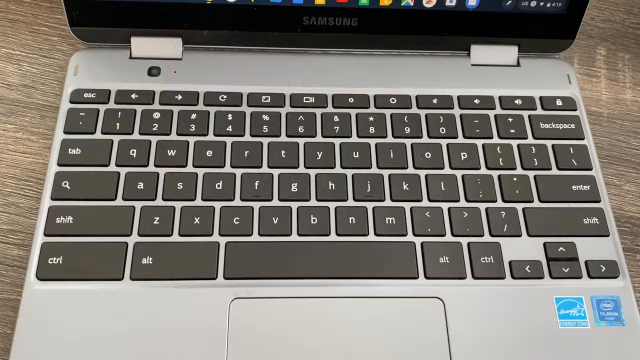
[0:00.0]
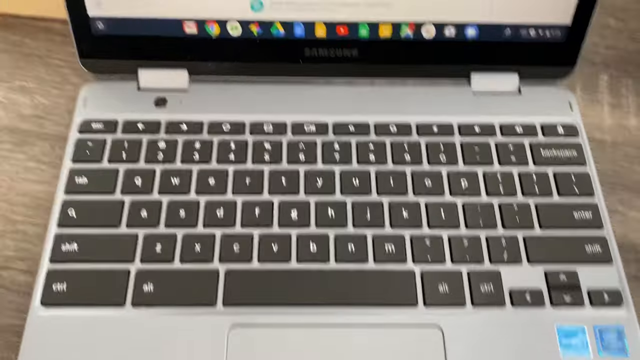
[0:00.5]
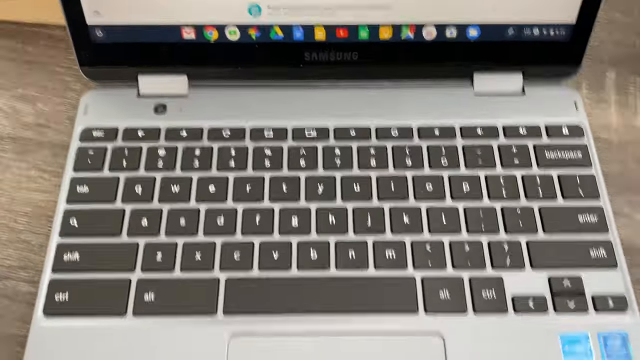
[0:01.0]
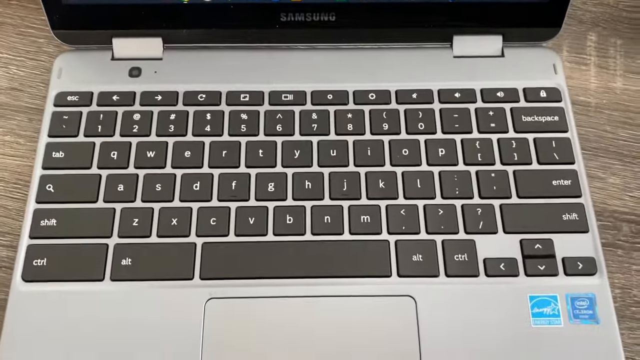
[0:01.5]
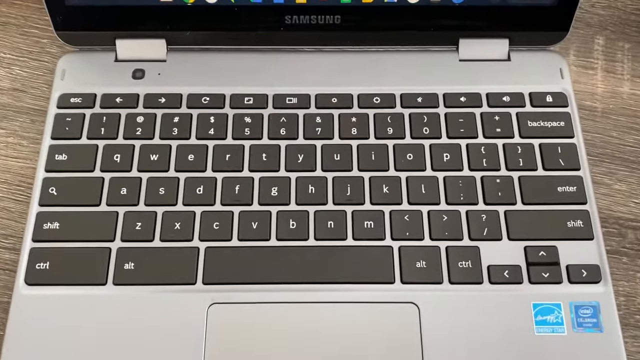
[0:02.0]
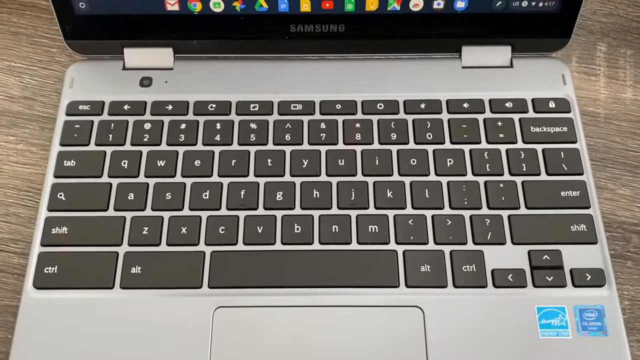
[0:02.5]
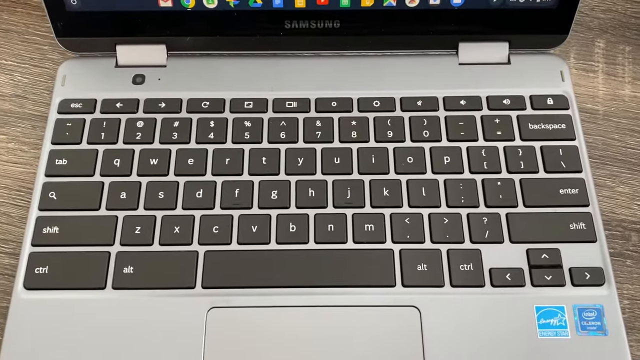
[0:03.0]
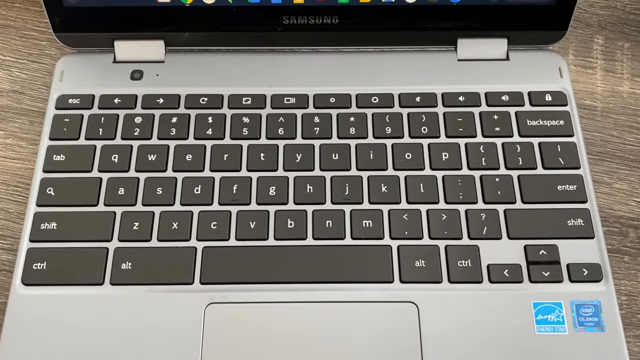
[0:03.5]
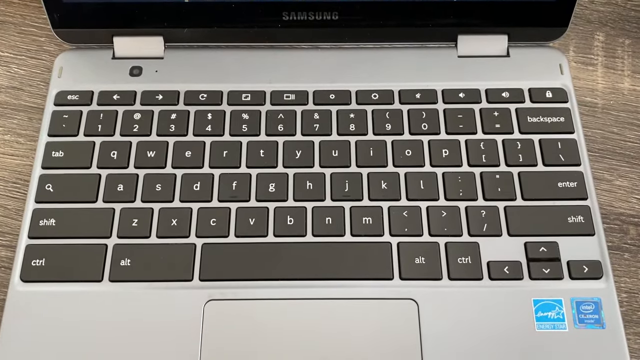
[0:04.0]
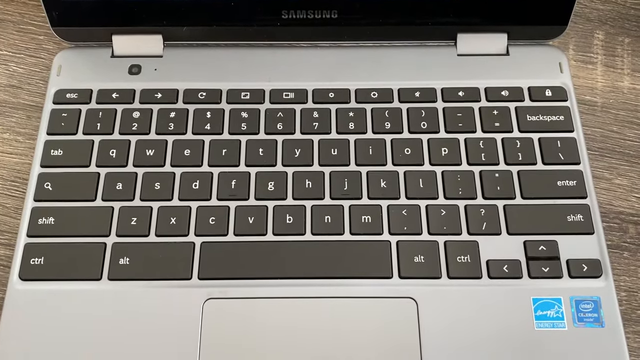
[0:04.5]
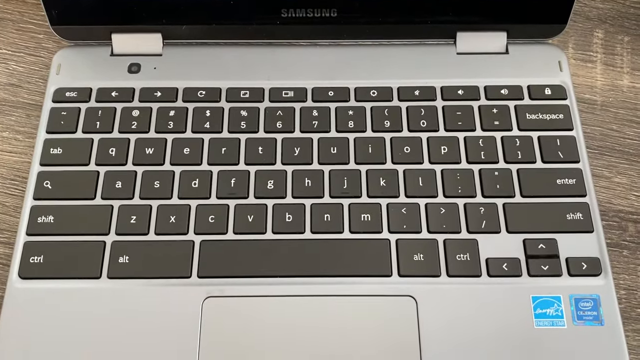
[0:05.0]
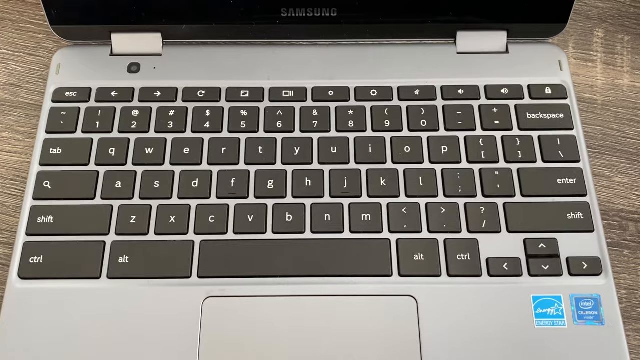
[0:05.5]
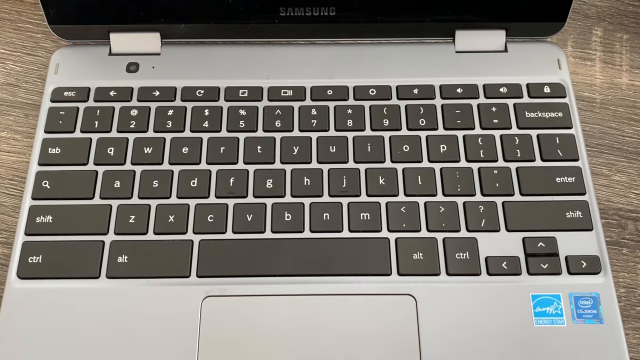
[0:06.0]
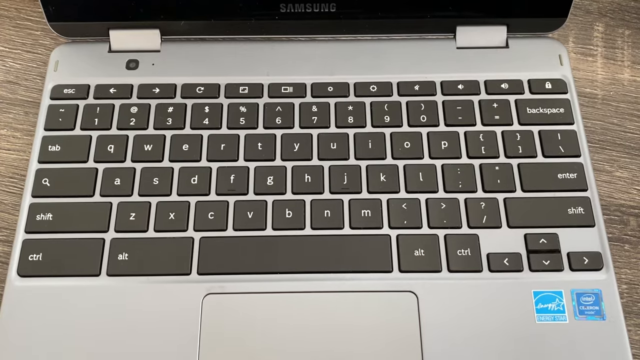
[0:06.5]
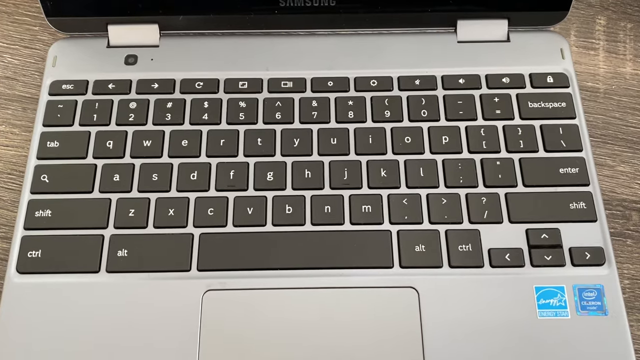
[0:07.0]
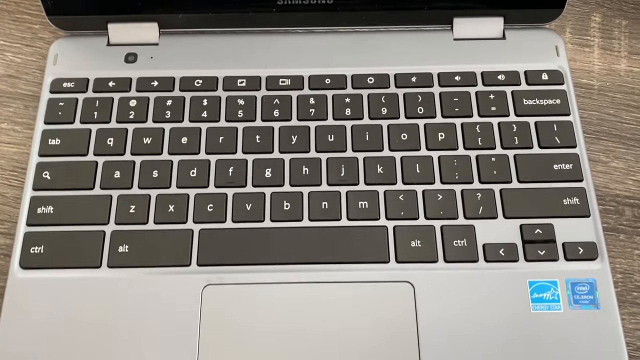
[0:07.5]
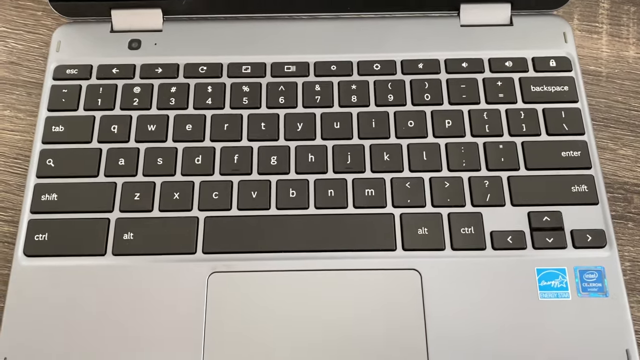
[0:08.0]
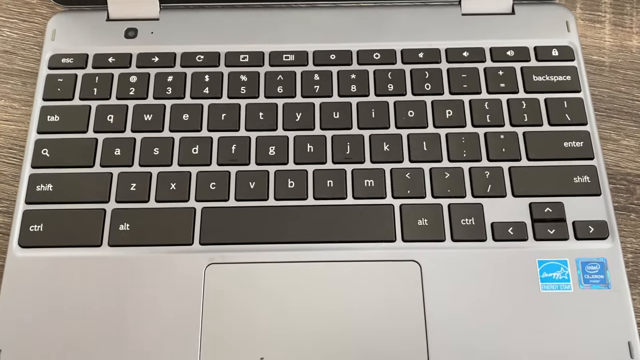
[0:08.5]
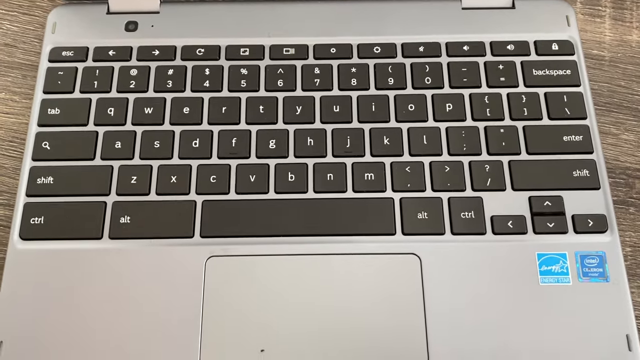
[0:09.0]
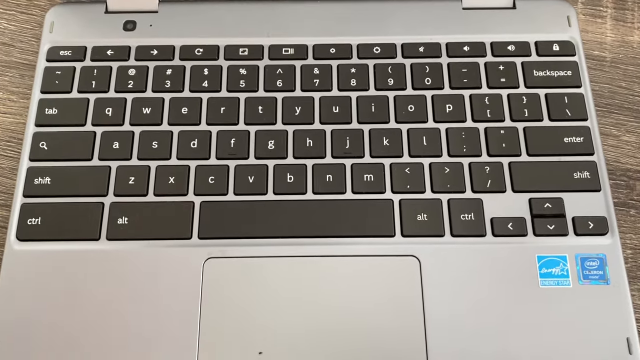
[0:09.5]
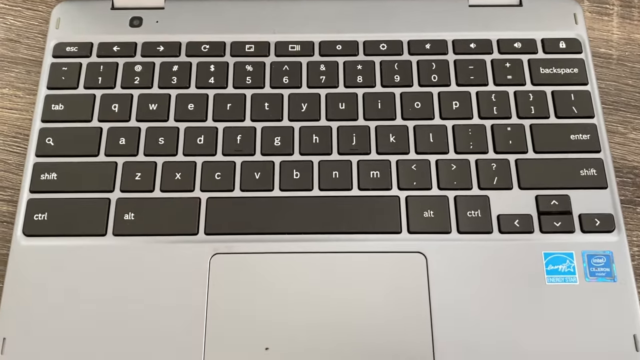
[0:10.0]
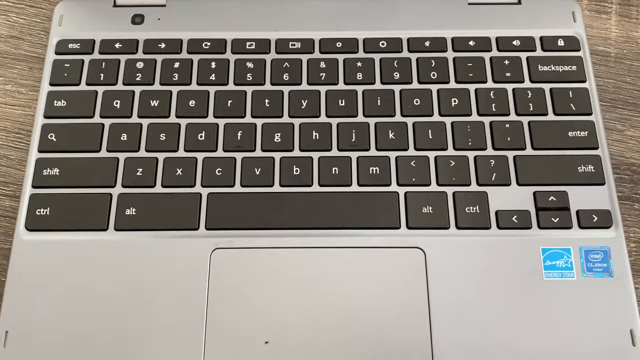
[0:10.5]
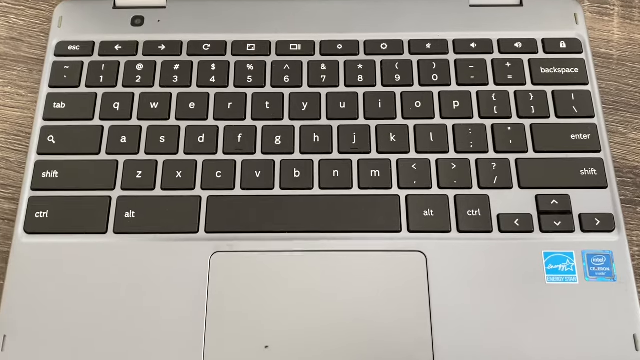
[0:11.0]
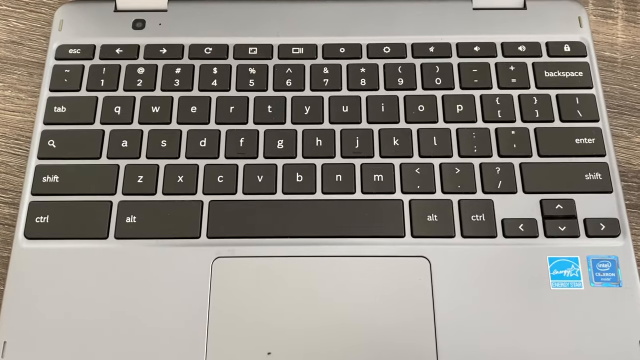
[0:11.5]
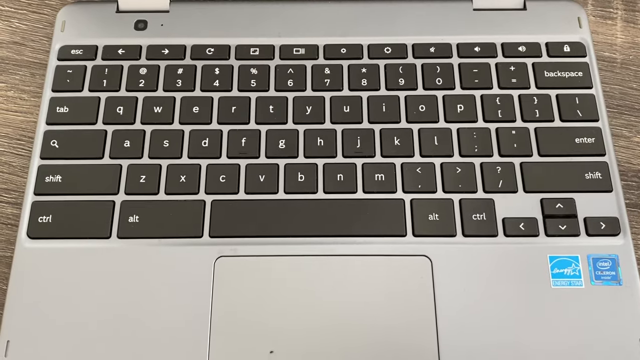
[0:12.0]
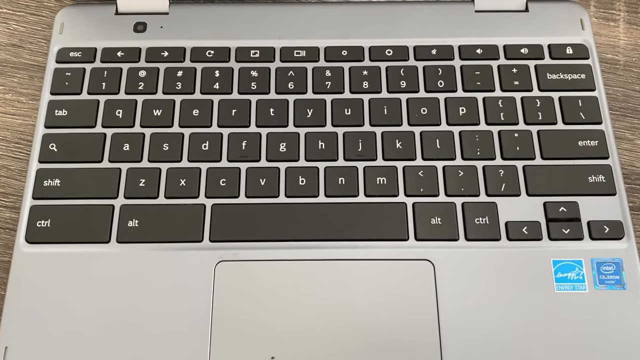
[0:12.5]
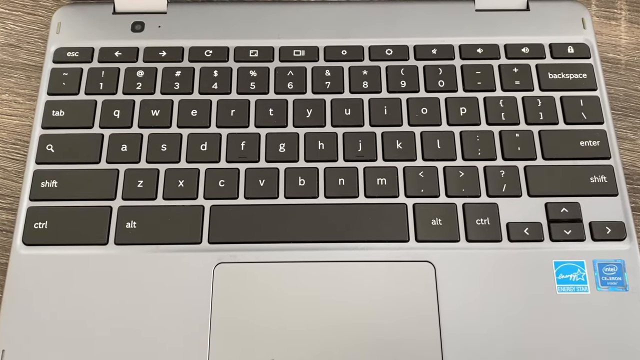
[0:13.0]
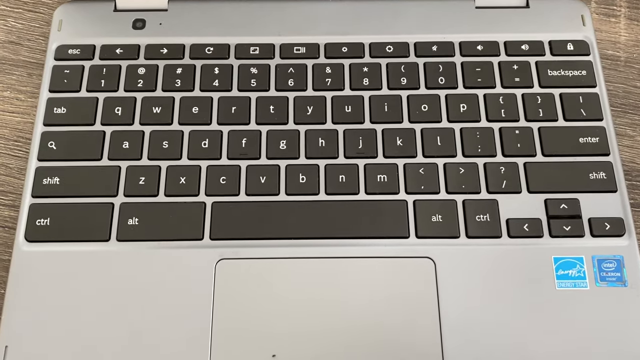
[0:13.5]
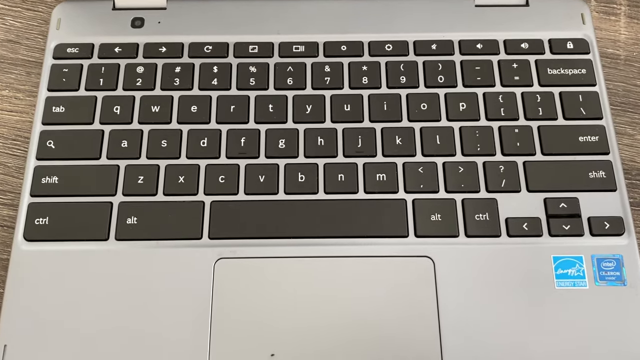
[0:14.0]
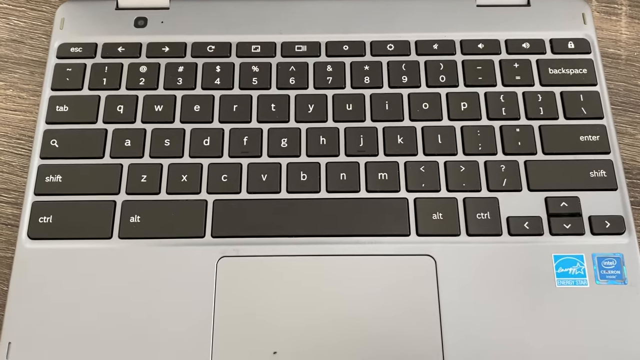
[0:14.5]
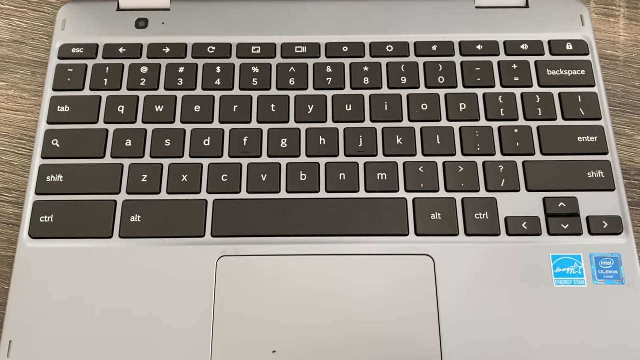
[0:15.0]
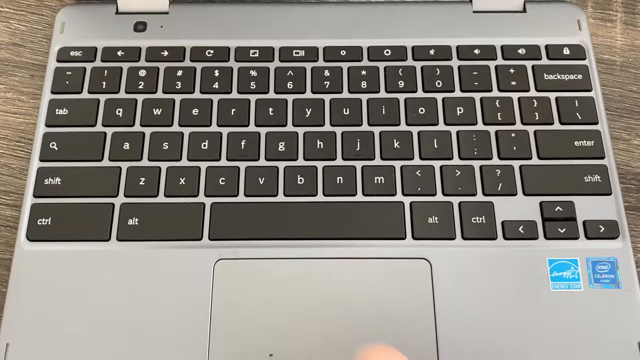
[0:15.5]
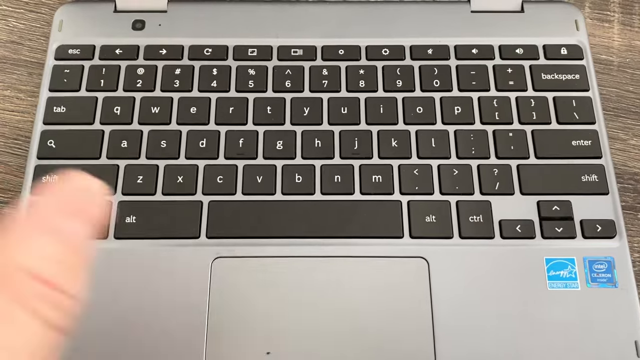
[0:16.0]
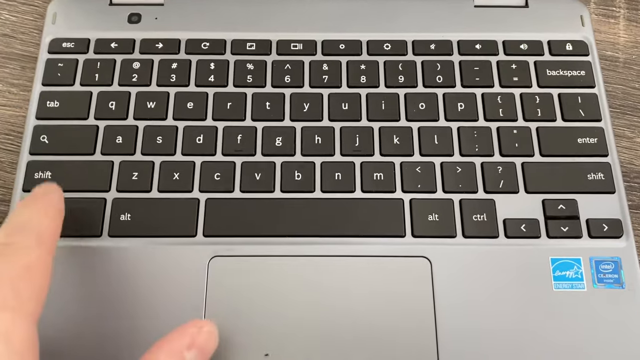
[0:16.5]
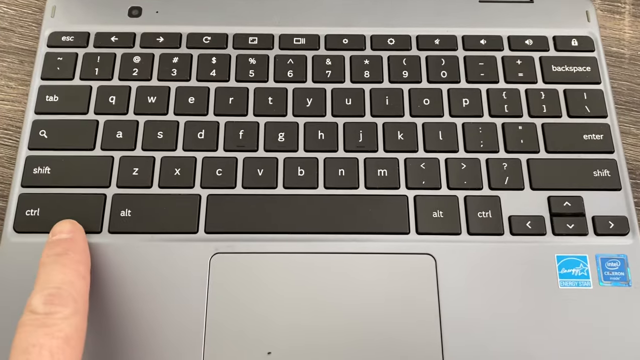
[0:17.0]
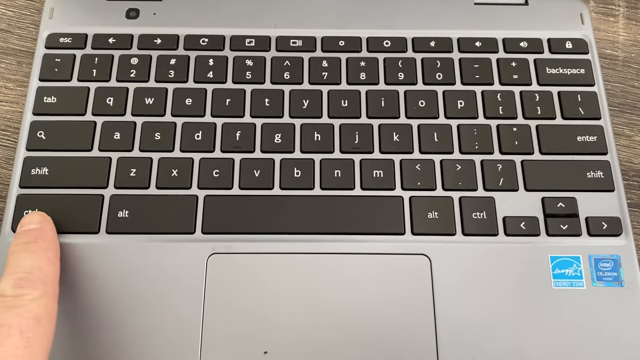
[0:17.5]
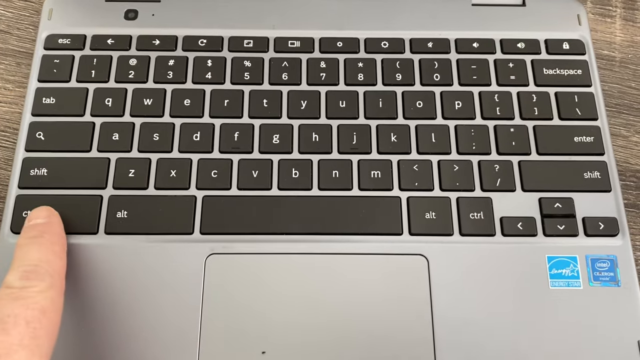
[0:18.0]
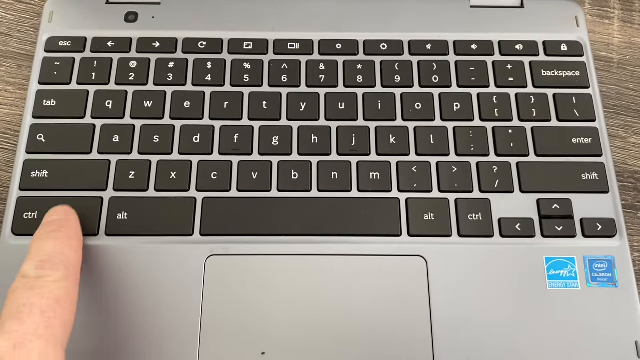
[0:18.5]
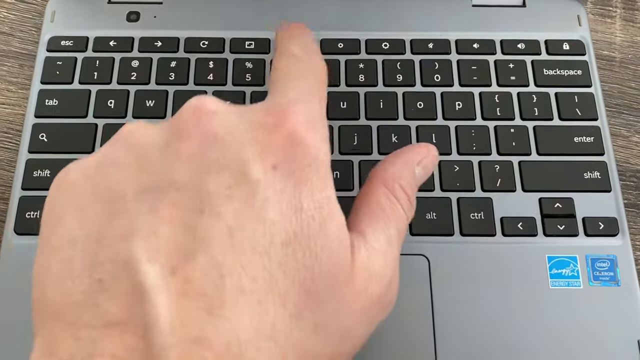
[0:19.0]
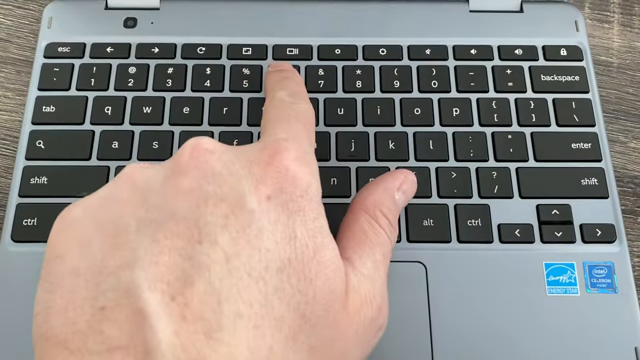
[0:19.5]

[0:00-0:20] The keyboard section of a silver laptop with black keys rests on a desk, apparently as part of some sort of tutorial. At first only the keyboard is visible. A hand then reaches in, and the index finger points to the control key on the lower left-hand side. The finger moves up and points to a button on the top row, the sixth from the left, which looks like a camera, maybe a video camera. The keyboard has no F buttons.